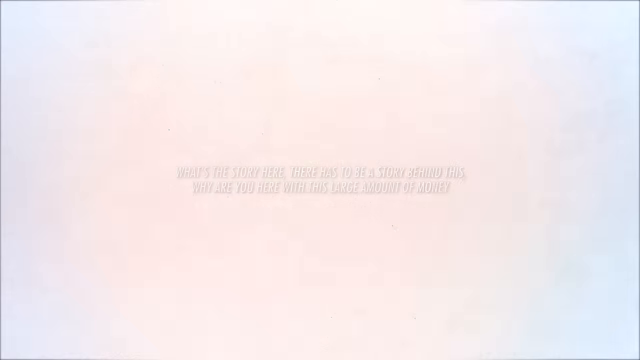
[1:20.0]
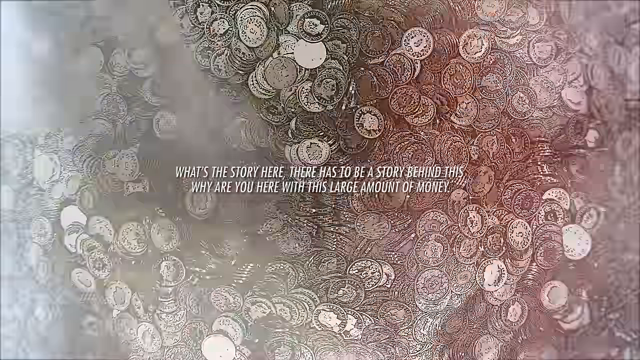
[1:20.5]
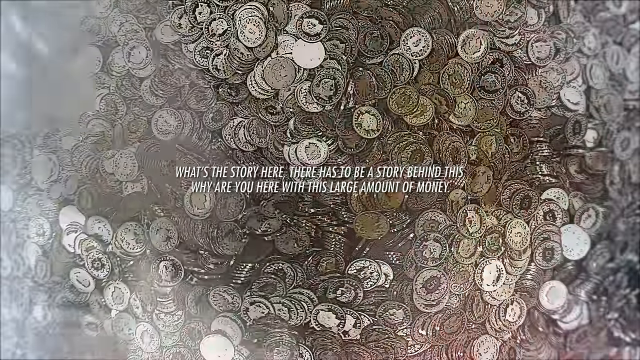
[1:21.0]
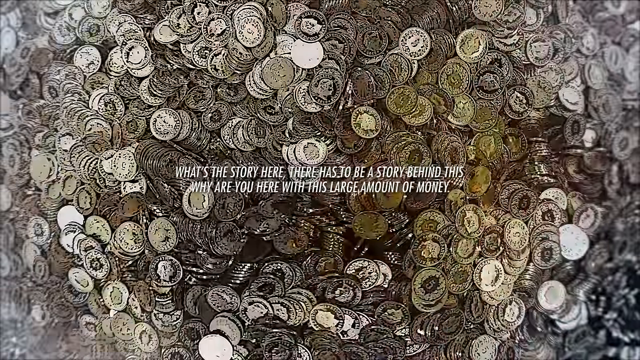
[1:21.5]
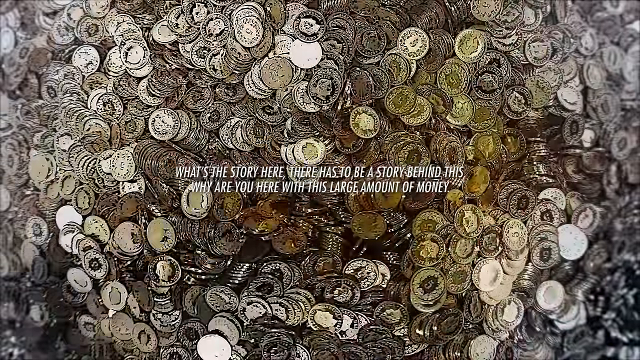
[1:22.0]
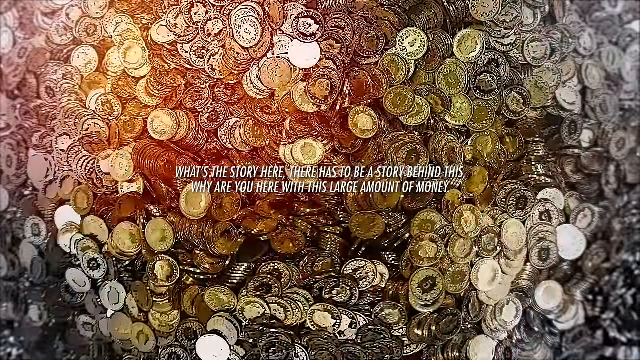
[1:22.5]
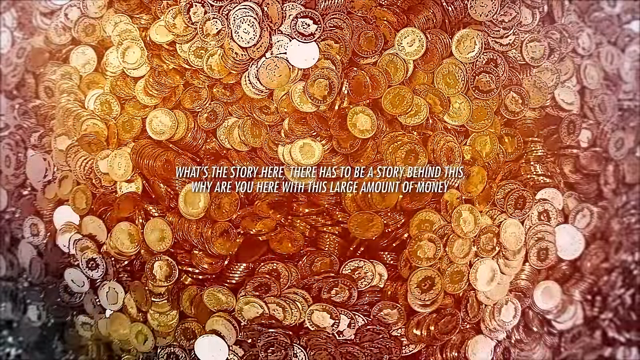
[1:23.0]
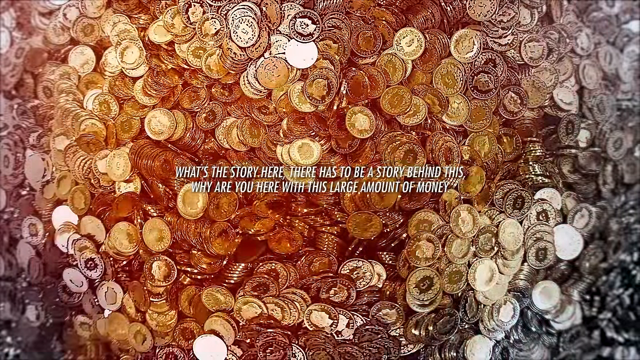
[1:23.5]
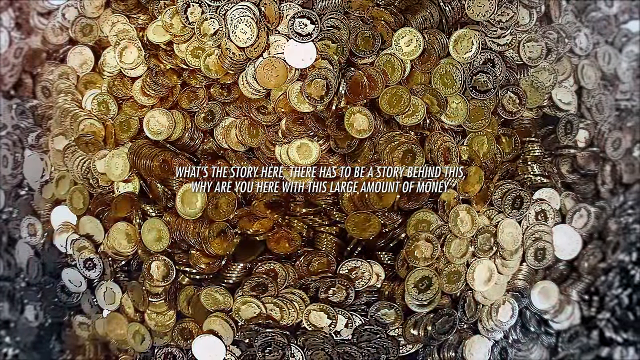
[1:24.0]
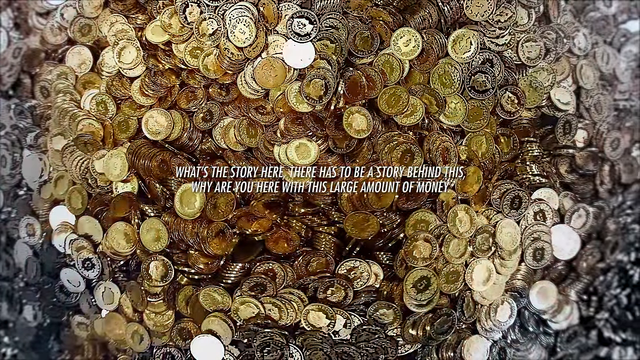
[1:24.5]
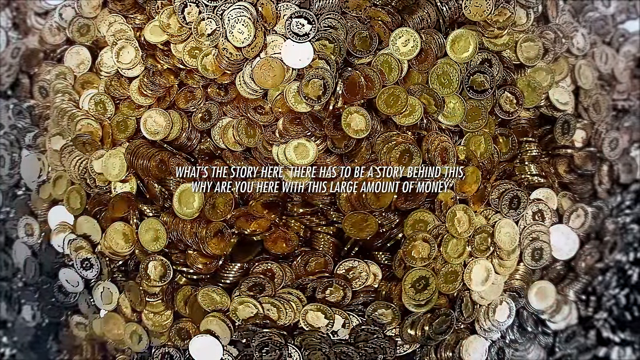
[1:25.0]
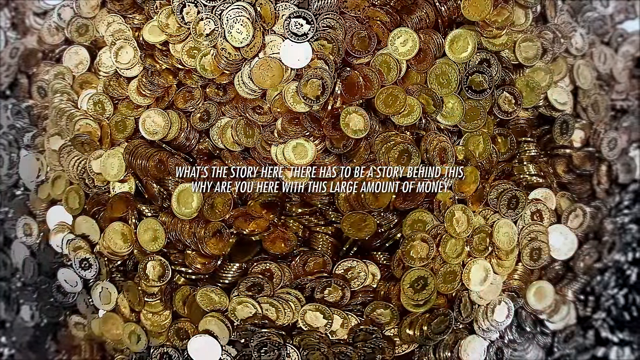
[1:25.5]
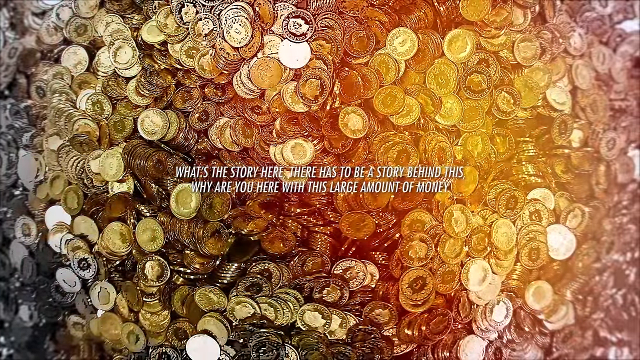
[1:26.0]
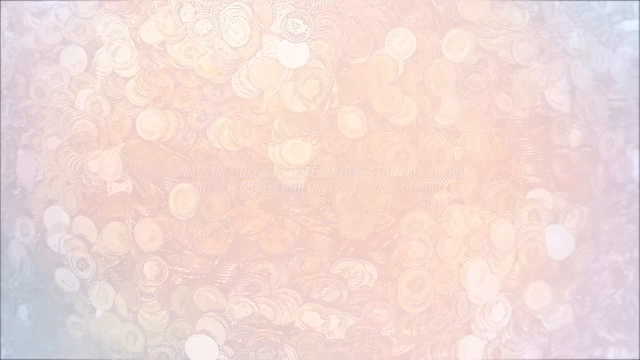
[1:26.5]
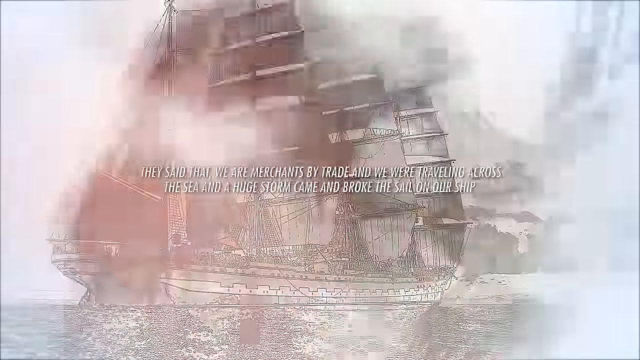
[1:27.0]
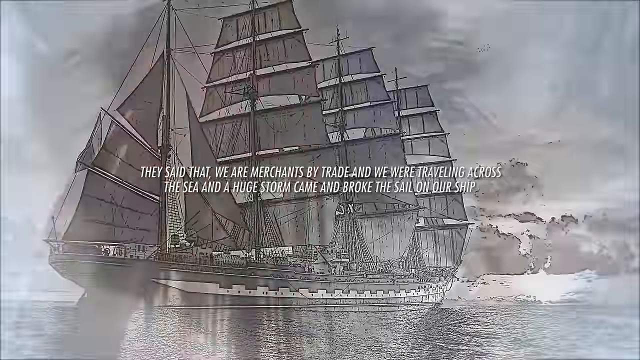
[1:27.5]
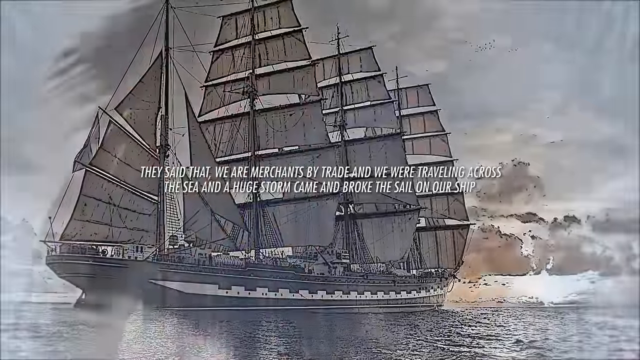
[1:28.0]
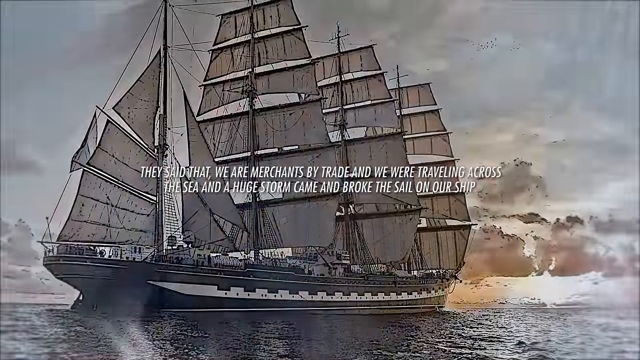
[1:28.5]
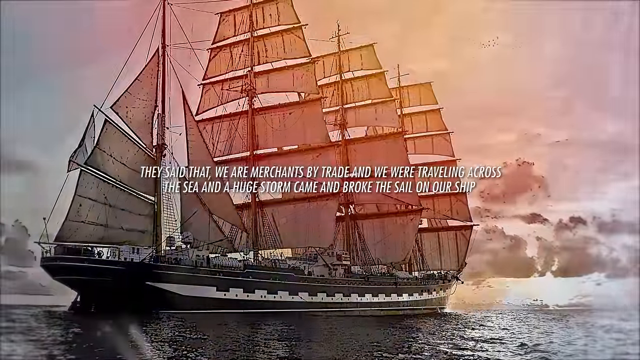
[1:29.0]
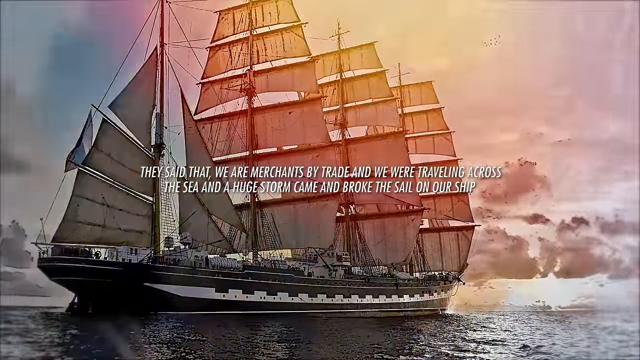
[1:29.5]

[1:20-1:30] The gold nuggets fade to a white, creamy screen, then the image fades back in, looking down at a huge stack of coins. Text in the middle talks about money. The coins are a variety of colors, either because of the lighting effects or because their colors actually differ: most in the center are gold, the coins in the corners are more of a silver-white color, and some in the top center are more grayish. The gold coins come in two shades, some a dark, brownish gold and others the classic bright yellow gold. A red hue of light flashes over the coins before a fade to white. Next is an old sailboat with three large masts with sails all stretched out, plus more sails at the back to help direct the ship. A red light flashes over the ship as well, while more text appears in the middle talking about a merchant ship.